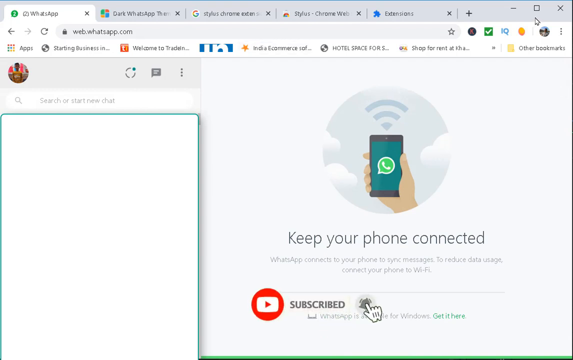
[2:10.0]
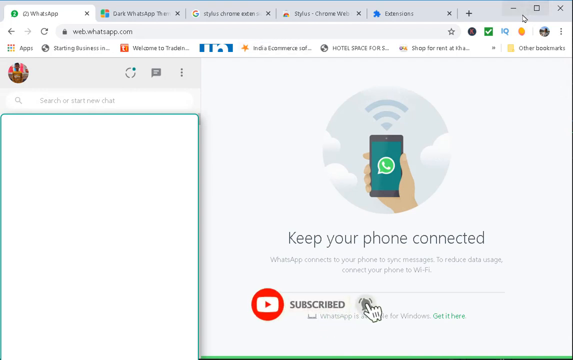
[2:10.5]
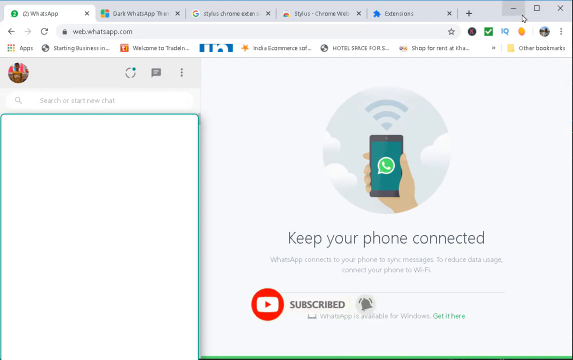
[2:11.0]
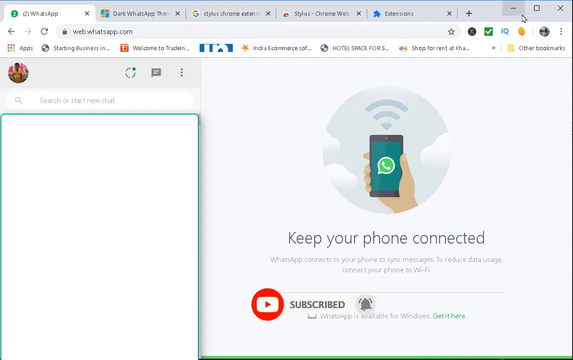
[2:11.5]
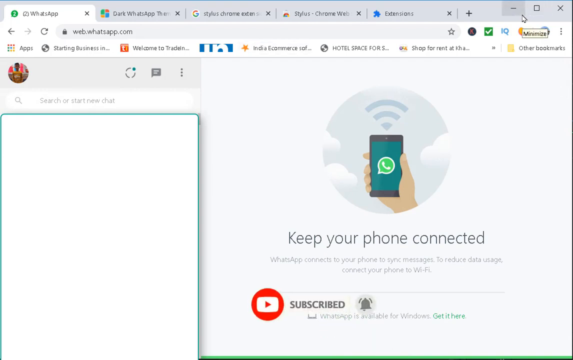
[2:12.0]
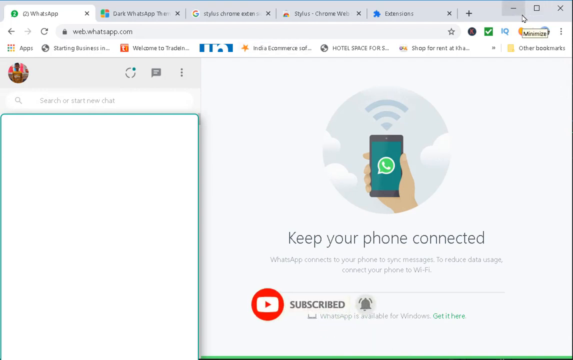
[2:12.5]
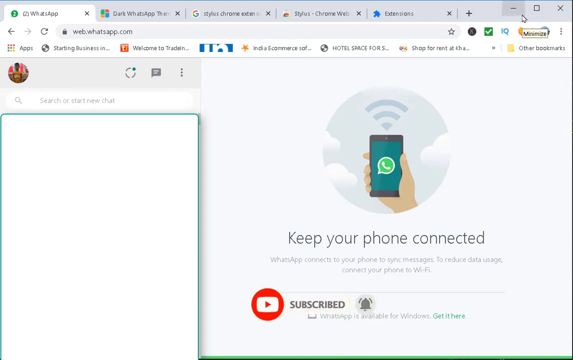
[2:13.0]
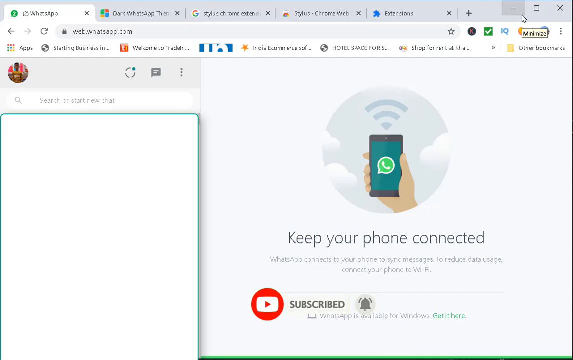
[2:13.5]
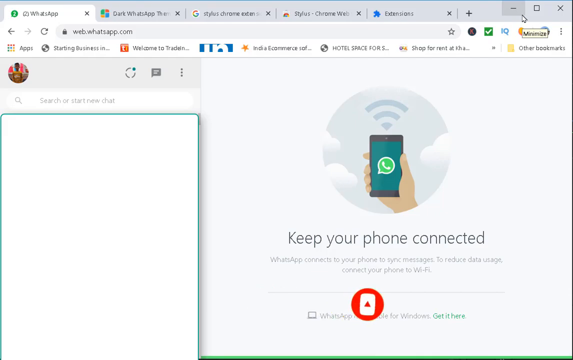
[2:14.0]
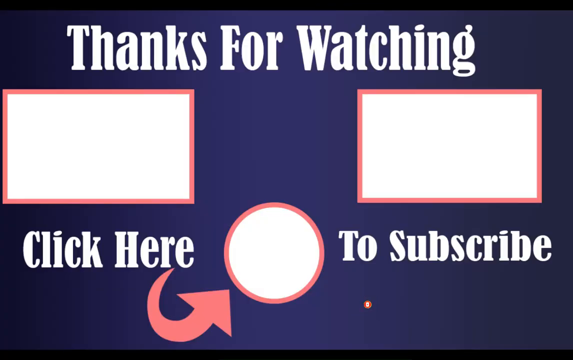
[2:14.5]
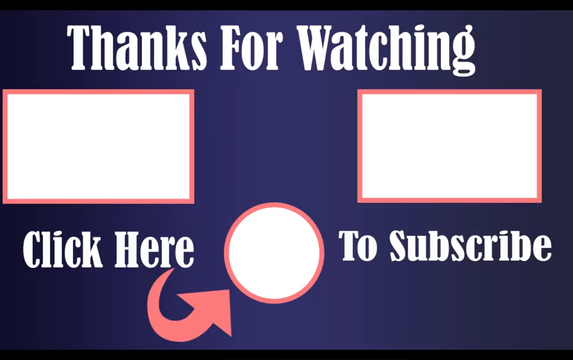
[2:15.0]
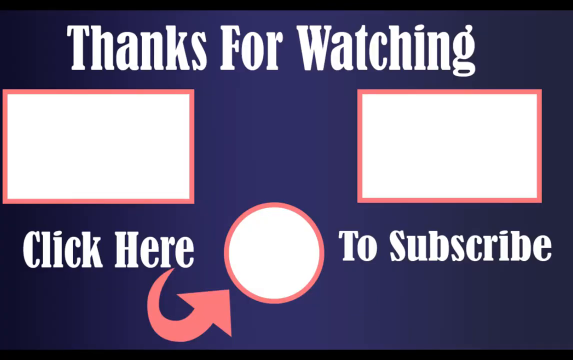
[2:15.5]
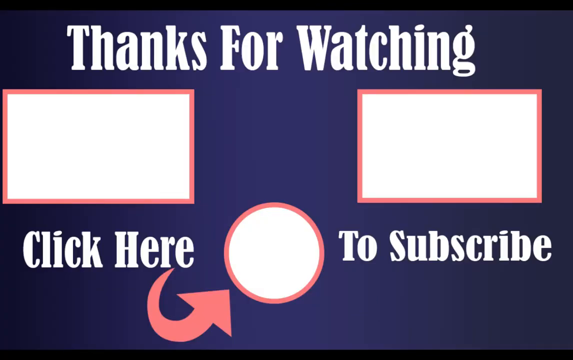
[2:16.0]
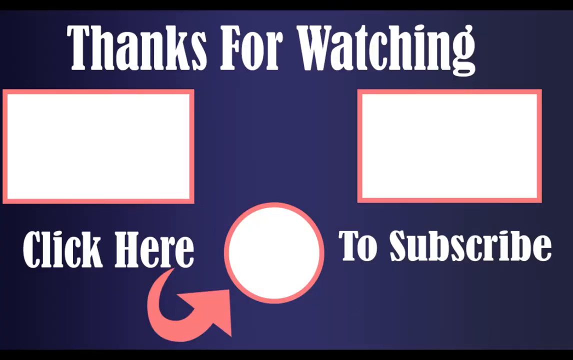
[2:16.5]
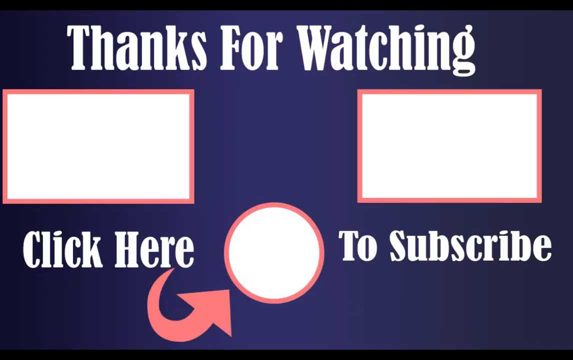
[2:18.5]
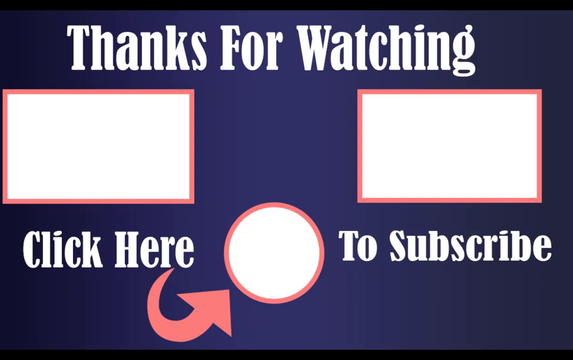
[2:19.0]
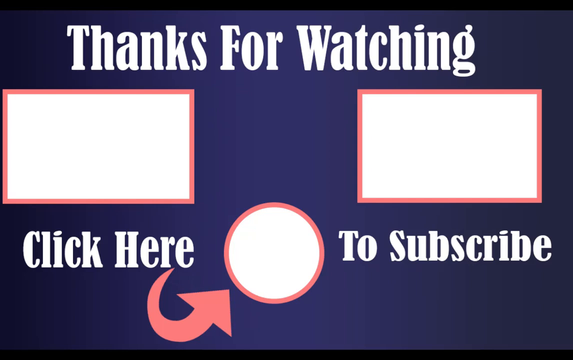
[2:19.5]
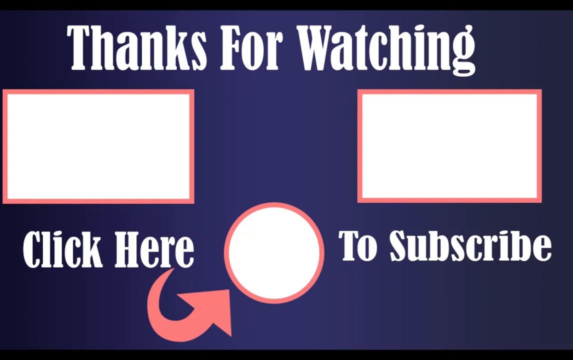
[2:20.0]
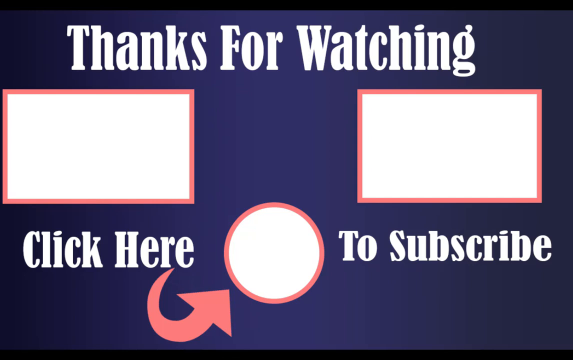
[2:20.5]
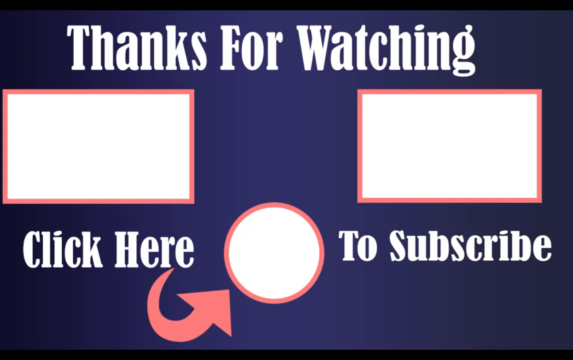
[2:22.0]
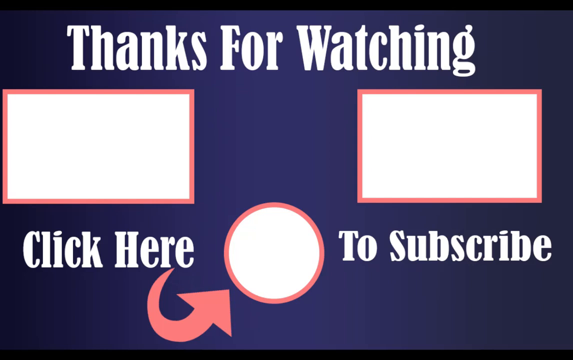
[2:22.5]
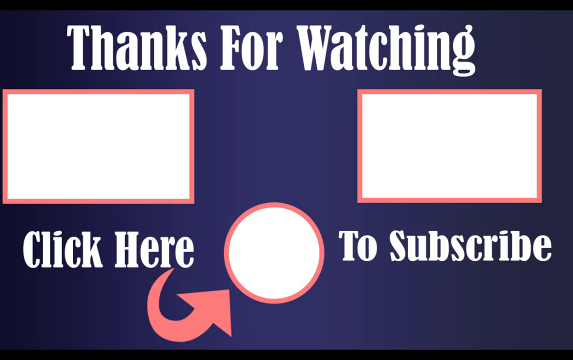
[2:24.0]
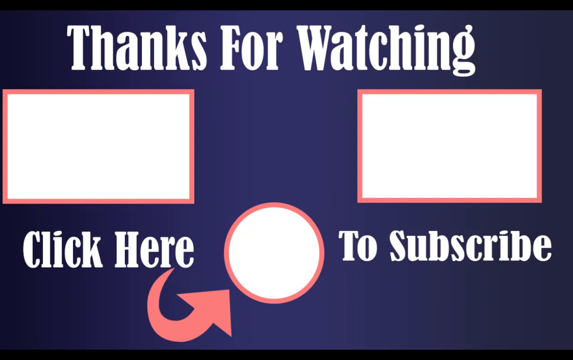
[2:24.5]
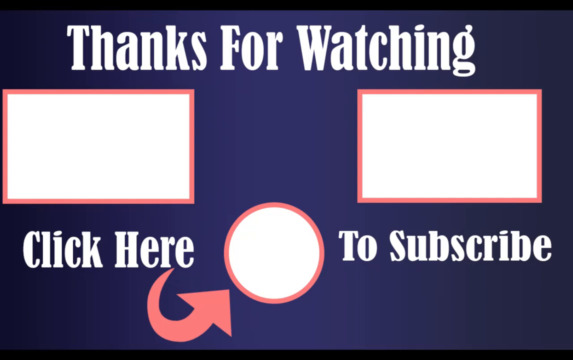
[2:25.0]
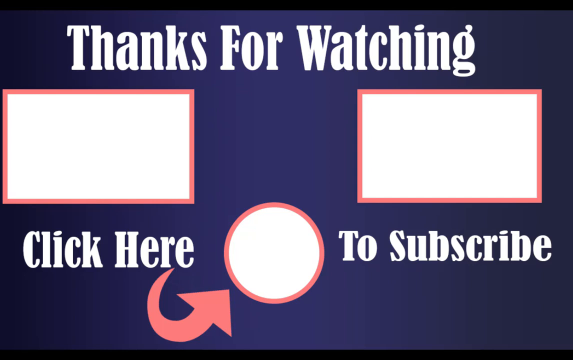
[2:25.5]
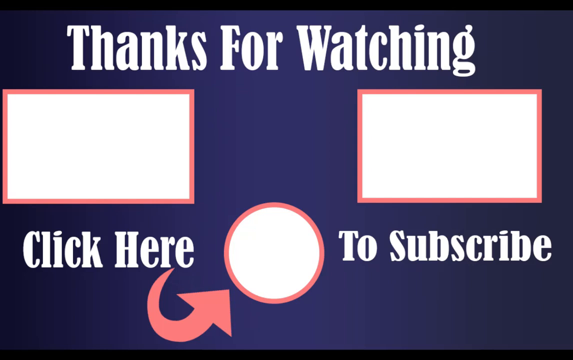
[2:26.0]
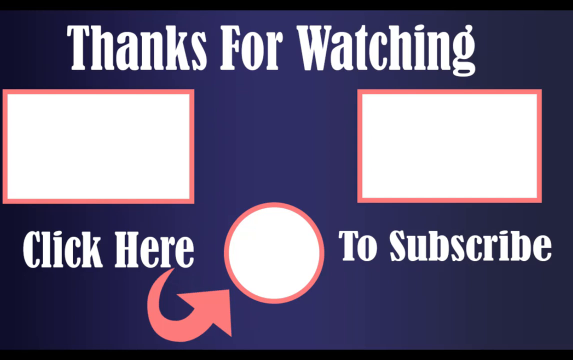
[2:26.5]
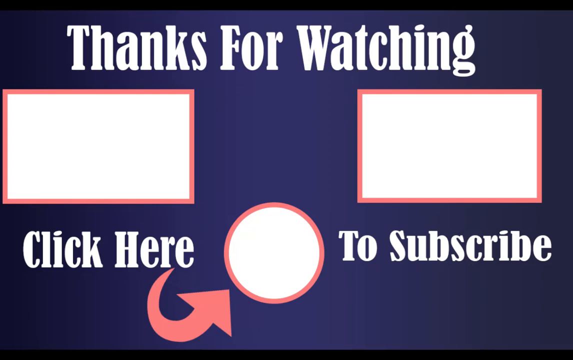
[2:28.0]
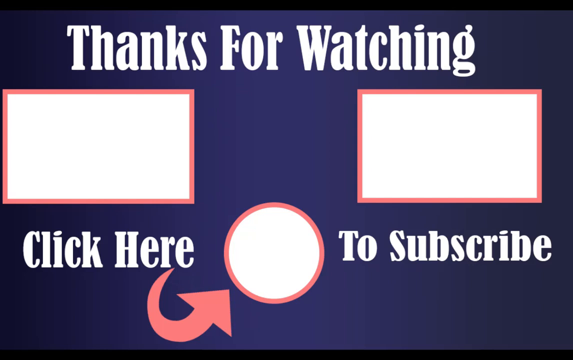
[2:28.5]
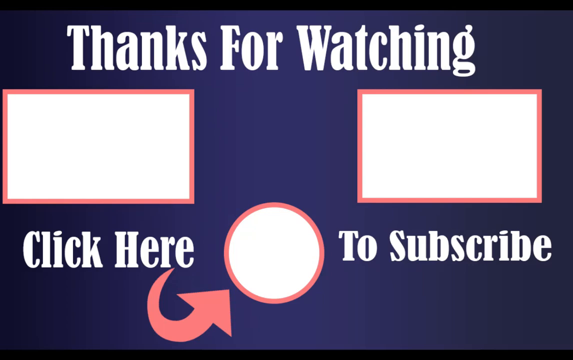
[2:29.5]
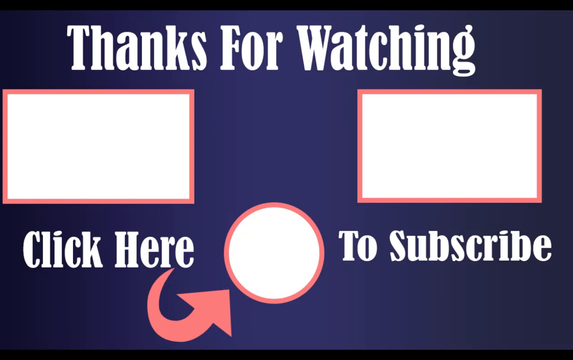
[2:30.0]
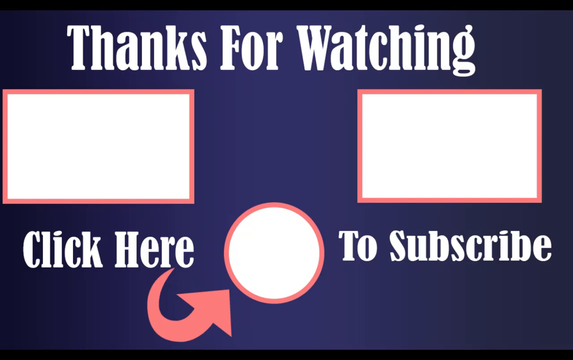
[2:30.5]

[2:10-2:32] The old WhatsApp theme and settings are restored. A message reads "thank you for watching" in white font, with rectangle boxes in the middle of a circle, the text "click here to subscribe", and an arrow pointing to the circle. The WhatsApp page shows clouds and a Wi-Fi icon on a phone, with the text "keep your phone connected" and "WhatsApp connects to your phone to sync messages, to reduce data usage connect your phone to your Wi-Fi."